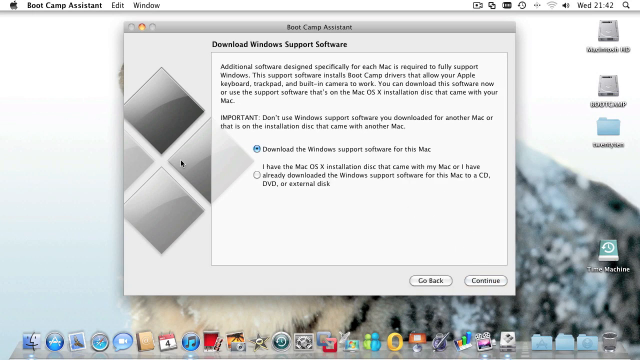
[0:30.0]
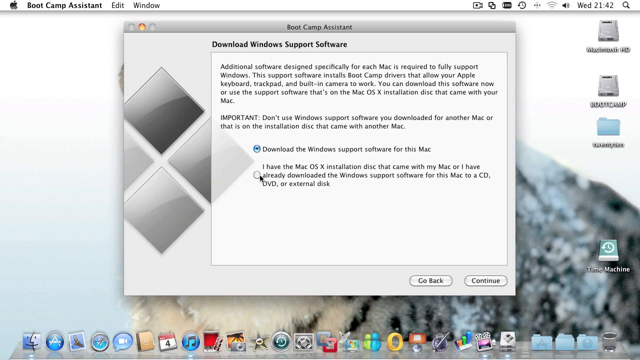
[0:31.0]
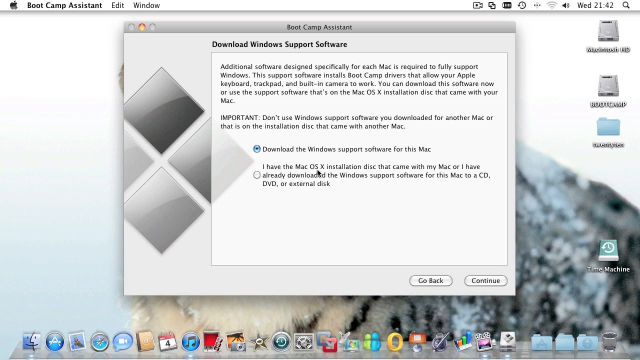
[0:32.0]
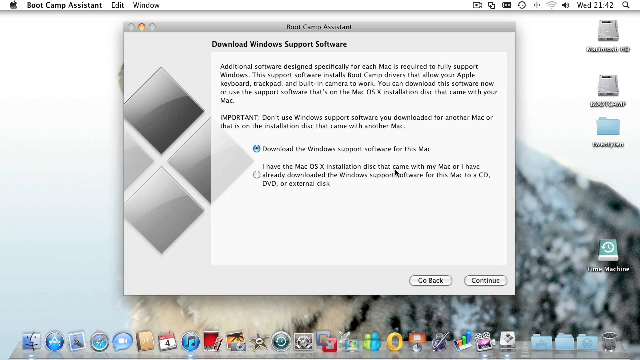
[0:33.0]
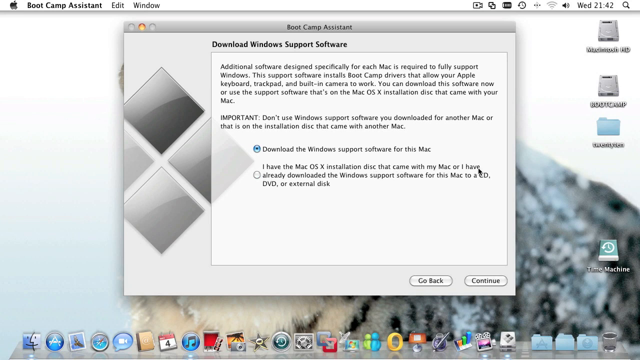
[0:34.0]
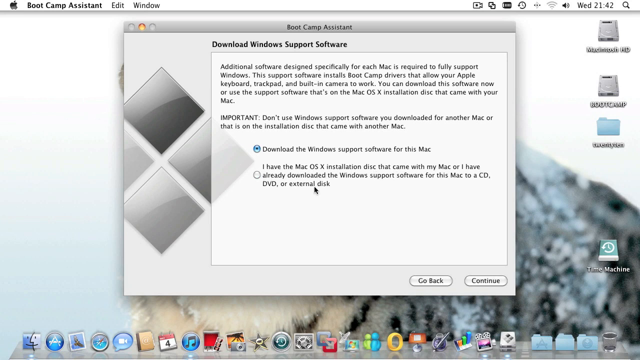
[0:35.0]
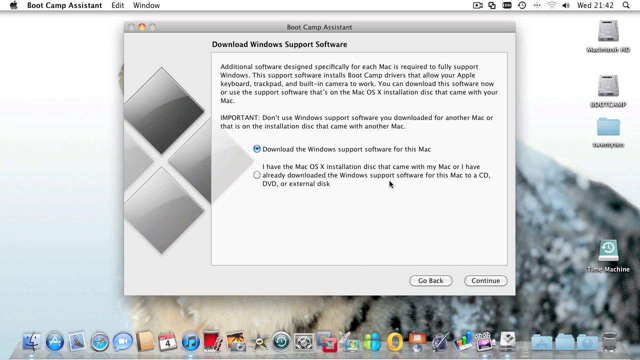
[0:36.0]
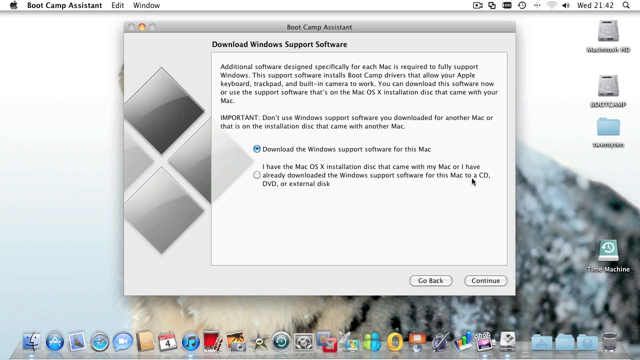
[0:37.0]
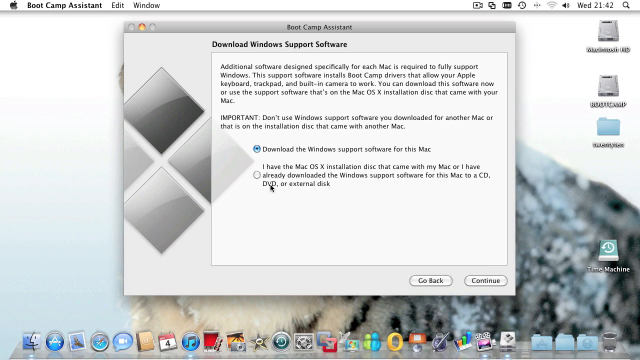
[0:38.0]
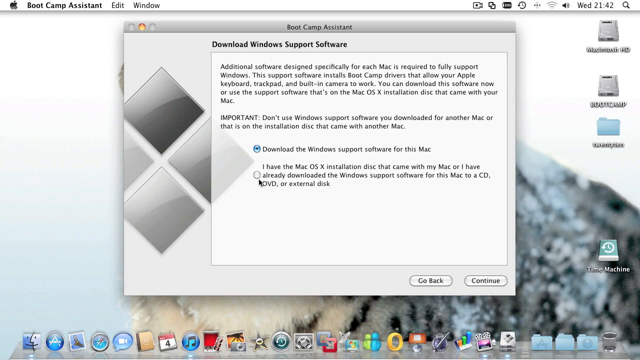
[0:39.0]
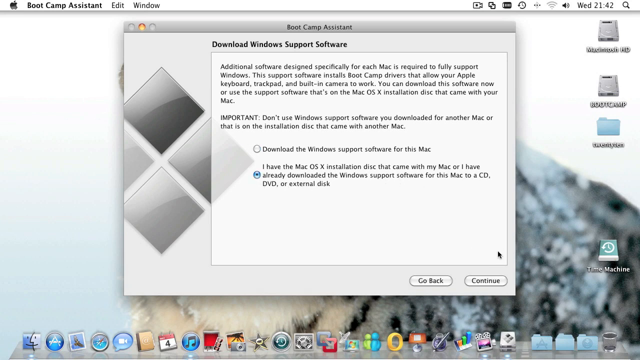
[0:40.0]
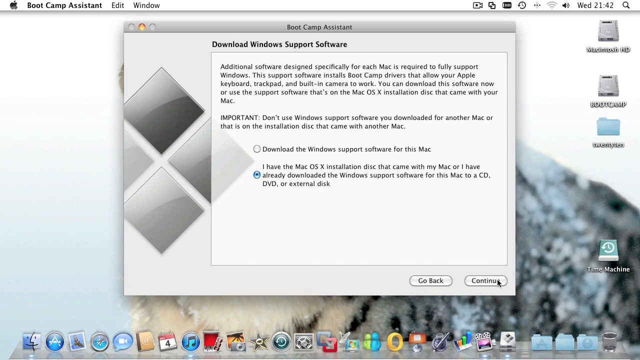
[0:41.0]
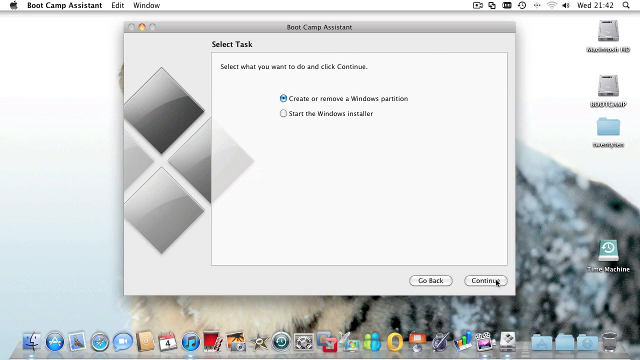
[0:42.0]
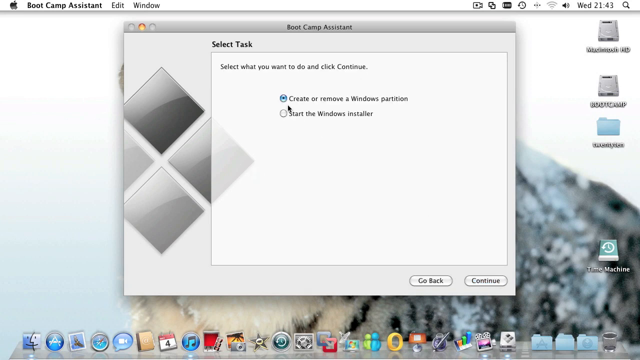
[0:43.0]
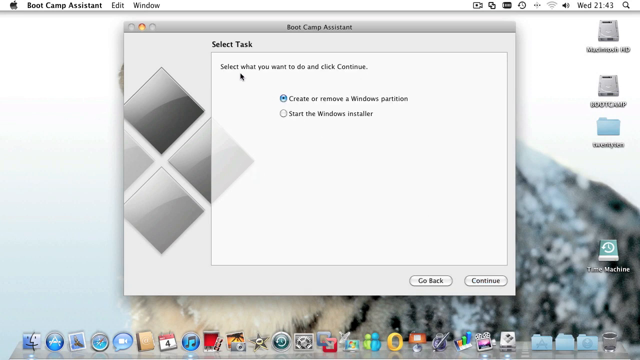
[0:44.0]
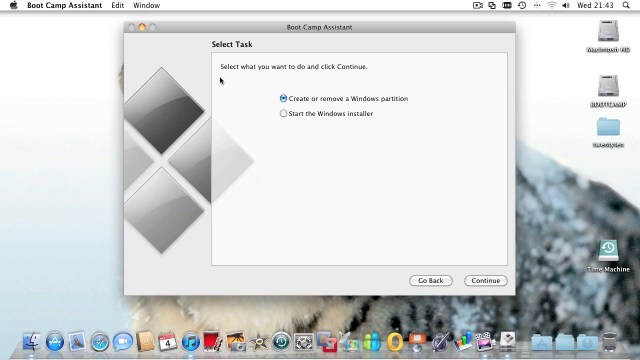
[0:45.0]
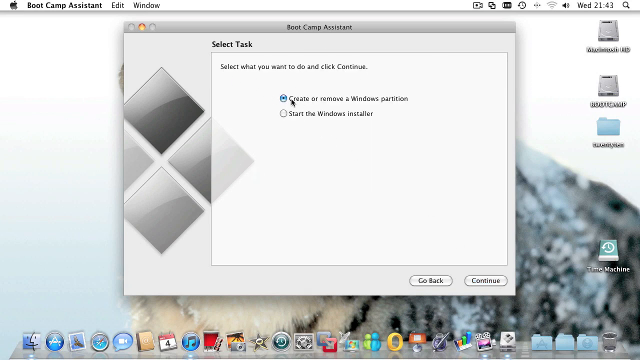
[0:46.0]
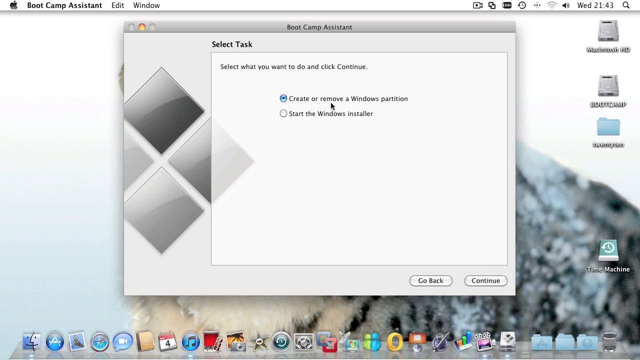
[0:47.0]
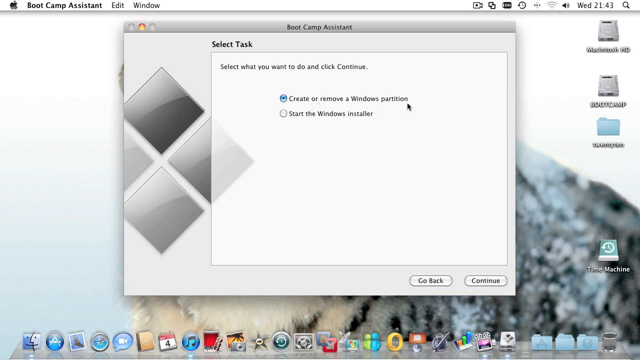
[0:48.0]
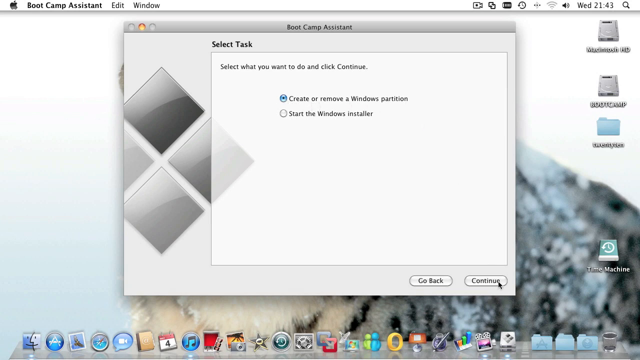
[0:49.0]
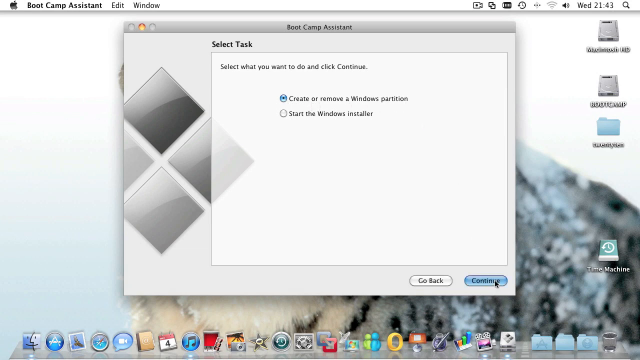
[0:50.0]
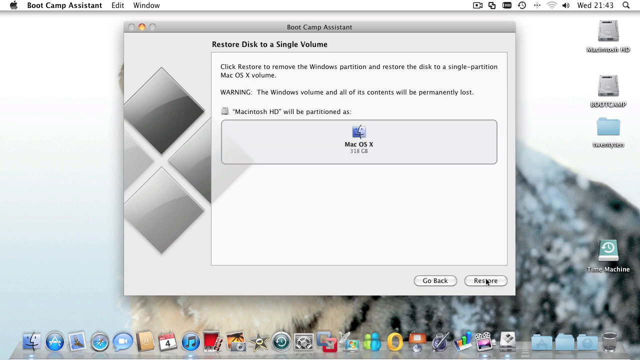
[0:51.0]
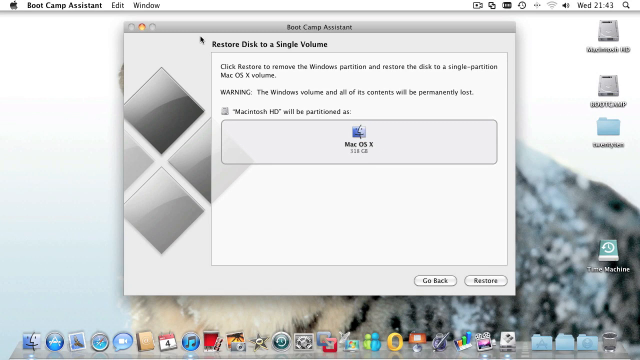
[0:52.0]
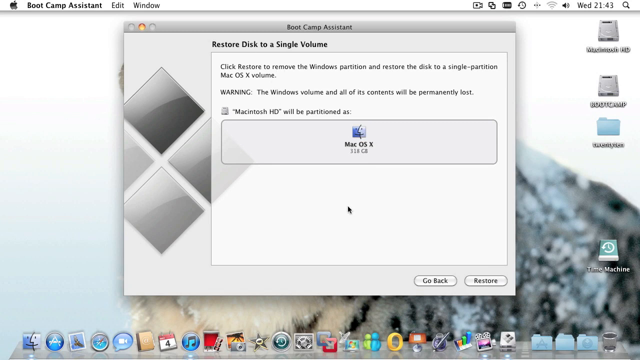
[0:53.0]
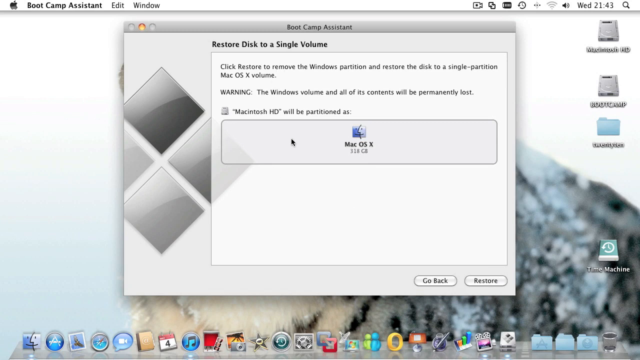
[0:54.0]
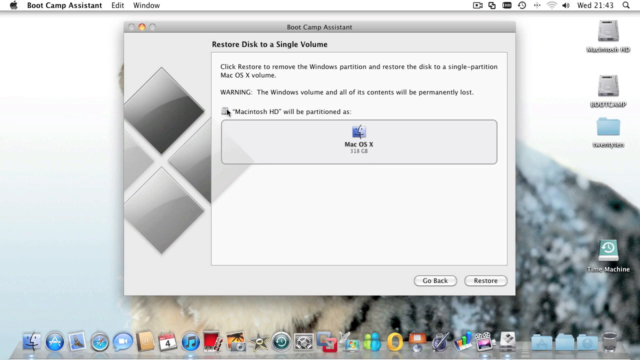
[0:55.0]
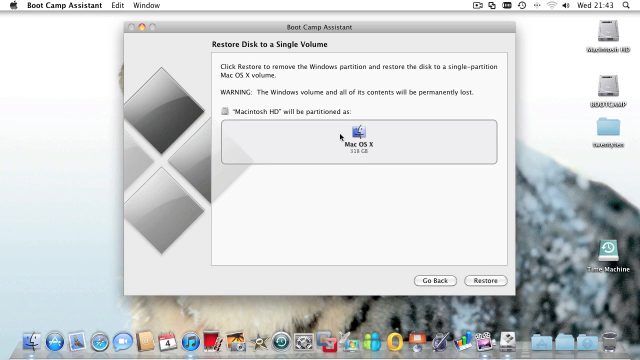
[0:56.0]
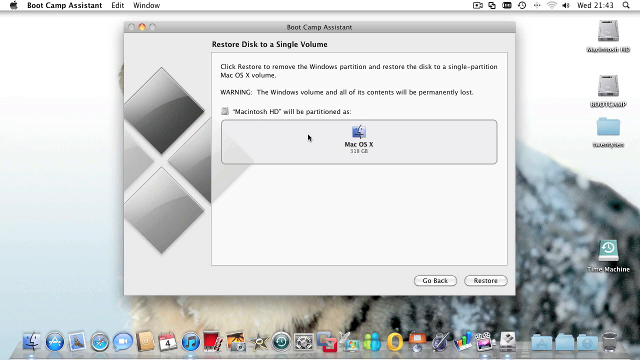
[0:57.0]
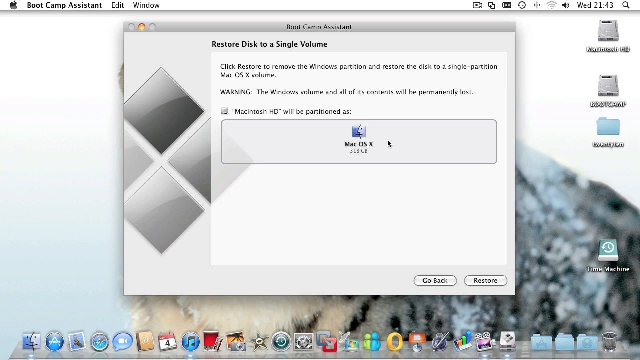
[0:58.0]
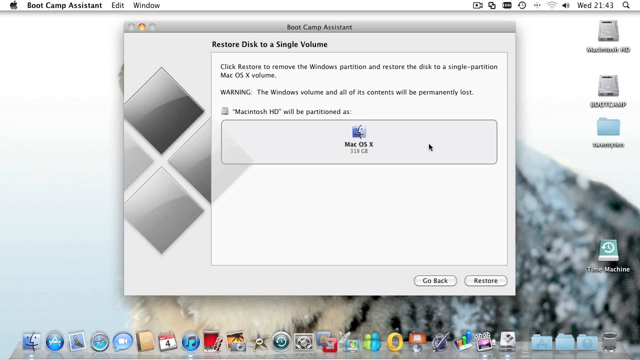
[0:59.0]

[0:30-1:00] Boot Camp Assistant is open on a Mac screen, showing "Download Windows Support Software" with the text "Additional software designed specifically for each Mac is required to fully support Windows." It explains that the support software installs Boot Camp drivers that allow the Apple keyboard, trackpad and built-in camera to work, and that the software can be downloaded now or taken from the Mac OS installation disk that came with the Mac. After a space, "IMPORTANT" appears in all capital letters, followed by "Don't use Windows support software you download for another Mac or that is on the installation disk that came with another Mac." Below are two options: the first, highlighted in blue, reads "Download the Windows support software for this Mac"; the second, not selected, reads "I have the Mac OS X installation disk that came with my Mac or I have already downloaded the Windows support software for this Mac to a CD, DVD, or external disk." "Boot Camp Assistant" appears in the top left with a small Apple icon to its left, there are various icons on the screen, and a gray background image of an animal is behind the window. The cursor clicks the scrolling arrow, moves through the bottom option, clicks it, and hits the Continue button at the bottom. The next screen says "Select Tasks" with two options: "Create or Remove a Windows Partition" and "Start the Windows Installer." The arrow goes up, selects "Create or Remove a Windows Partition," and hits Continue. This leads to "Restore Disk to a Single Volume," which reads "Click Restore to remove the Windows partition and restore the disk to a single partition Mac OS X volume." Then "WARNING" appears in all caps, followed by "The Windows volume and all of its contents will be permanently lost. Macintosh HD will be partitioned as Mac OS X." The arrow moves over as if about to hit the Restore button, then goes back and forth across the screen over the options, and hovers over the Mac OS option.